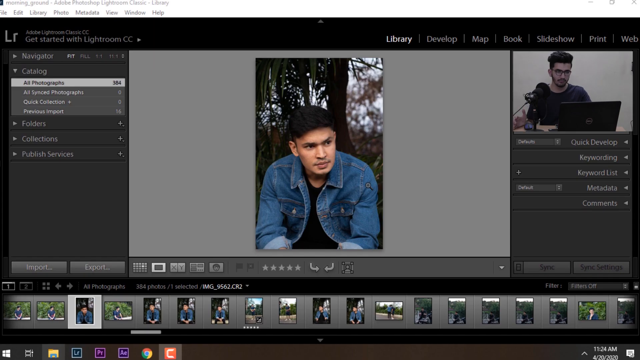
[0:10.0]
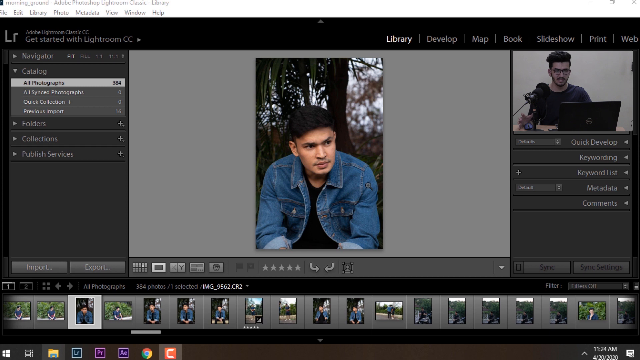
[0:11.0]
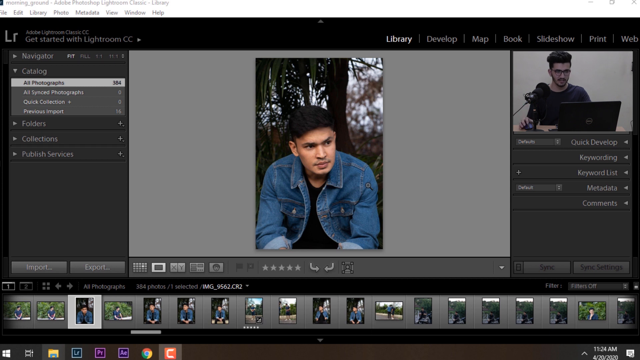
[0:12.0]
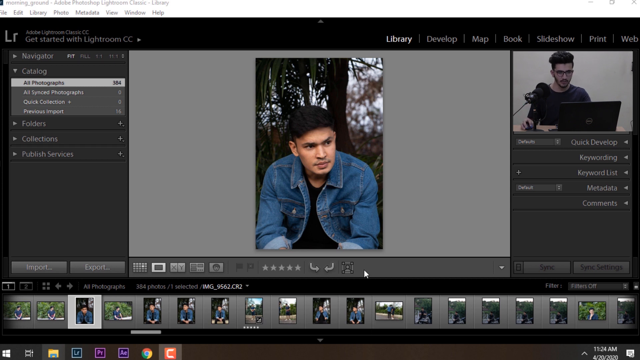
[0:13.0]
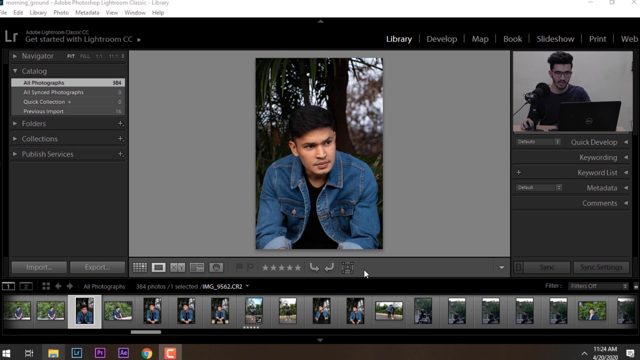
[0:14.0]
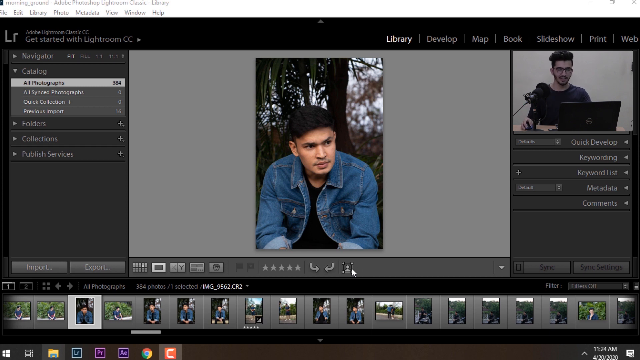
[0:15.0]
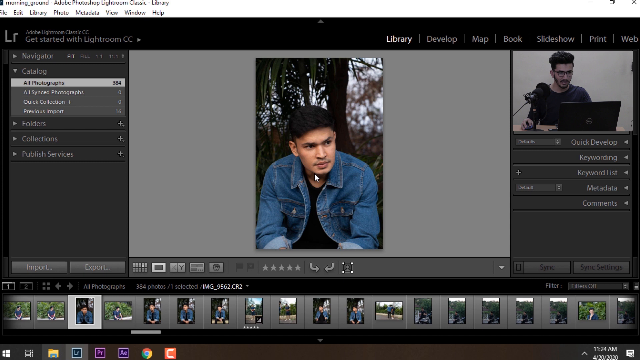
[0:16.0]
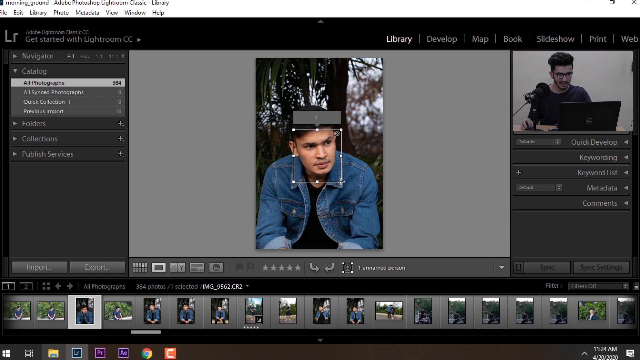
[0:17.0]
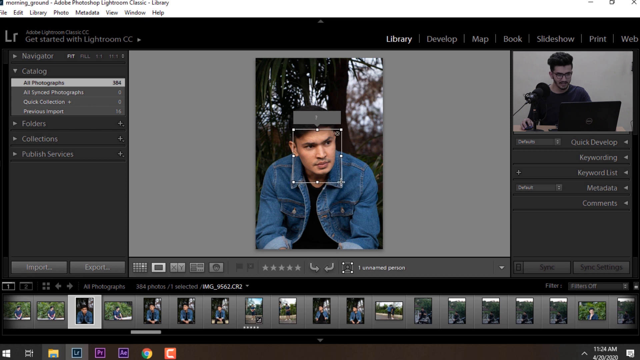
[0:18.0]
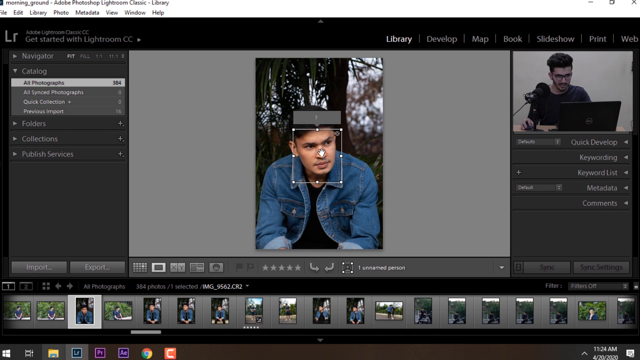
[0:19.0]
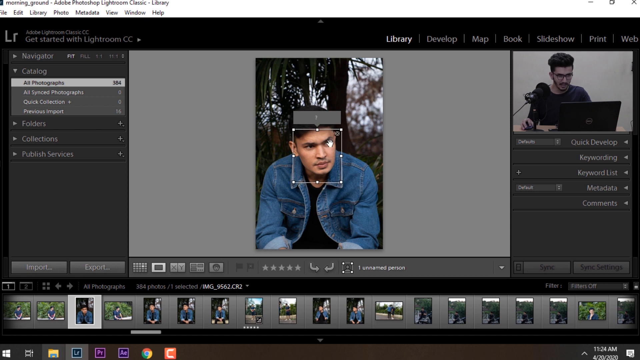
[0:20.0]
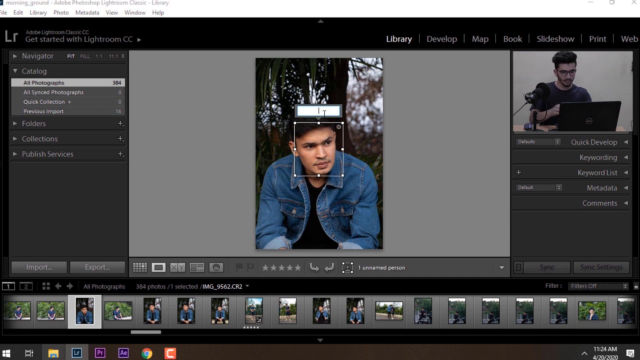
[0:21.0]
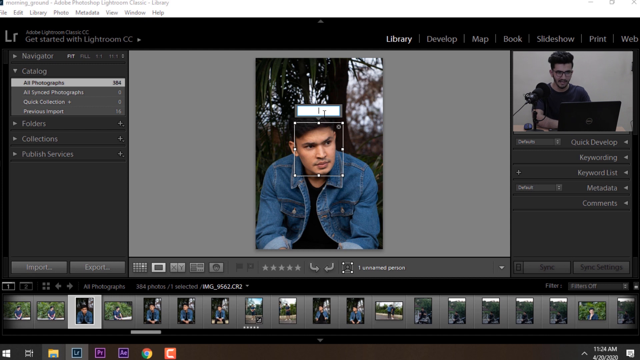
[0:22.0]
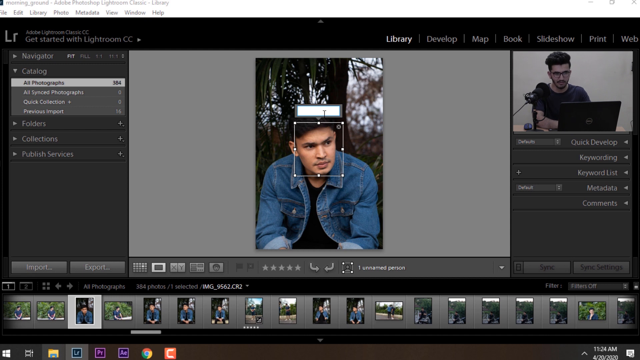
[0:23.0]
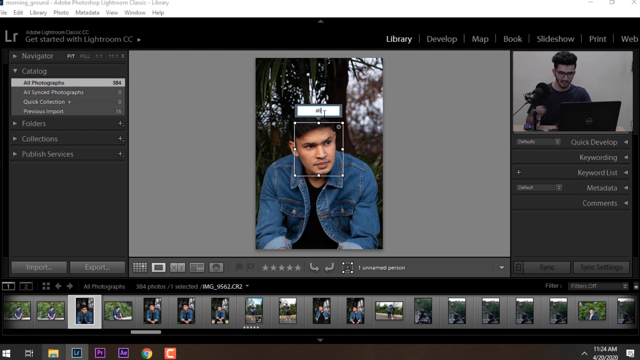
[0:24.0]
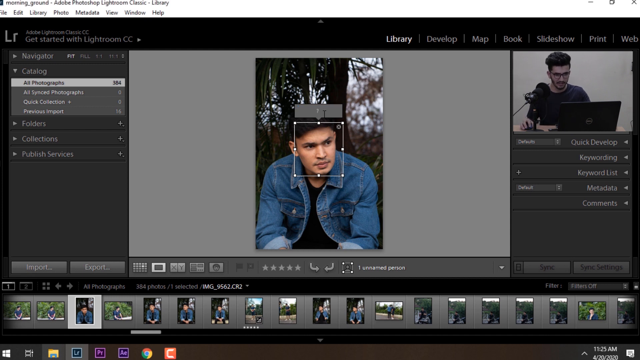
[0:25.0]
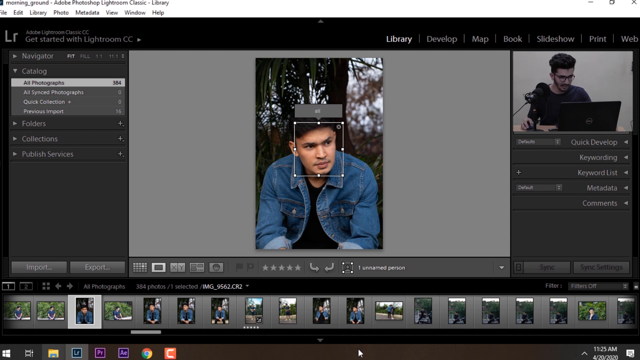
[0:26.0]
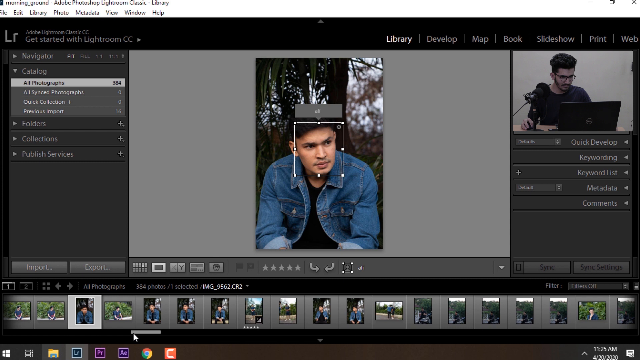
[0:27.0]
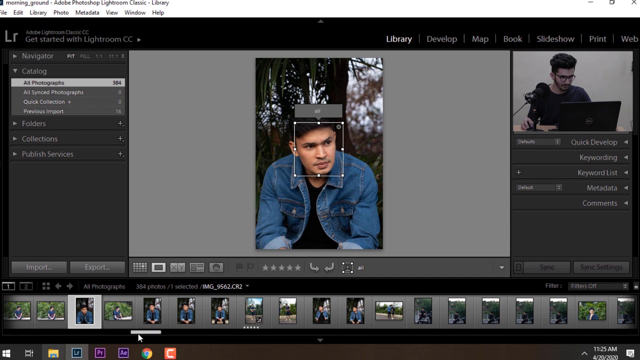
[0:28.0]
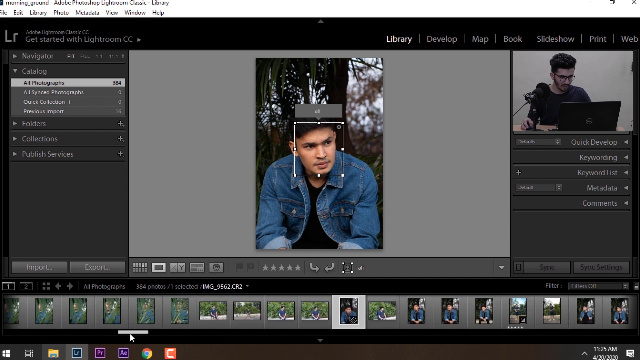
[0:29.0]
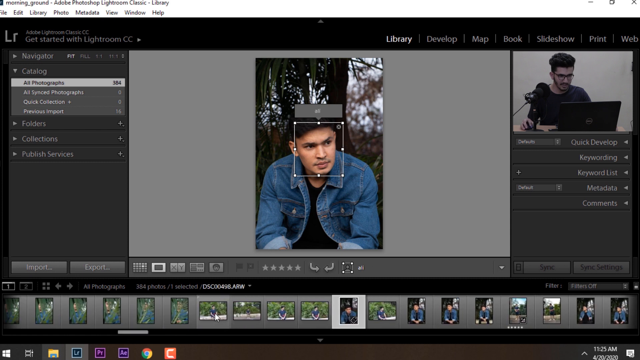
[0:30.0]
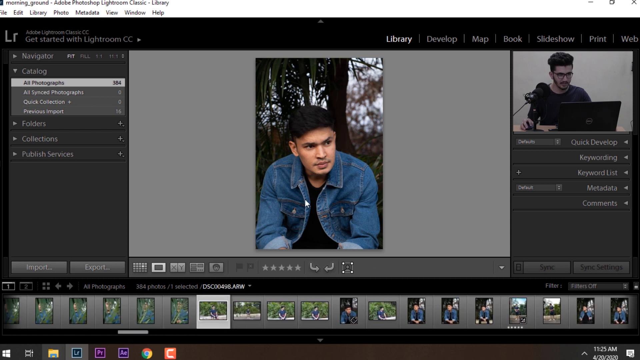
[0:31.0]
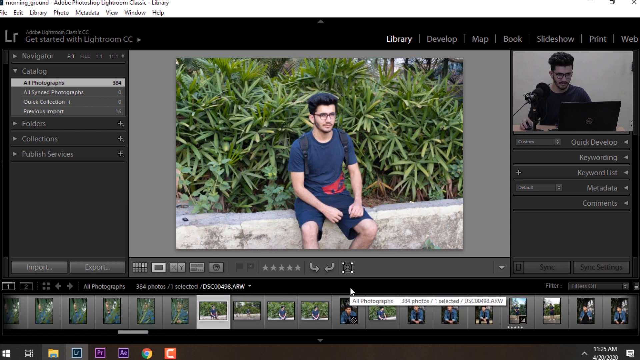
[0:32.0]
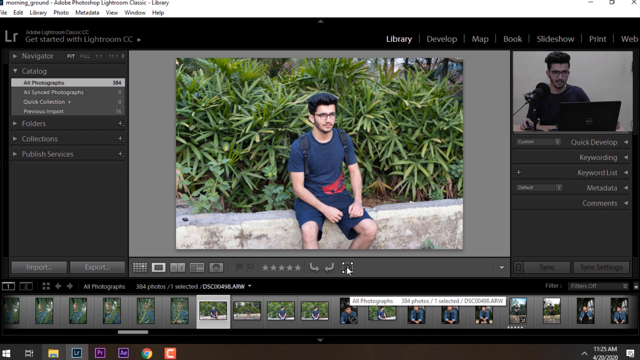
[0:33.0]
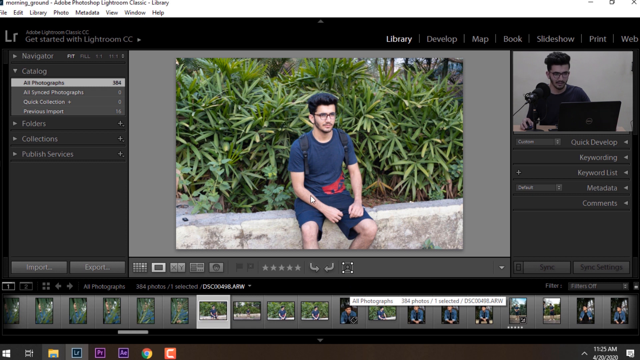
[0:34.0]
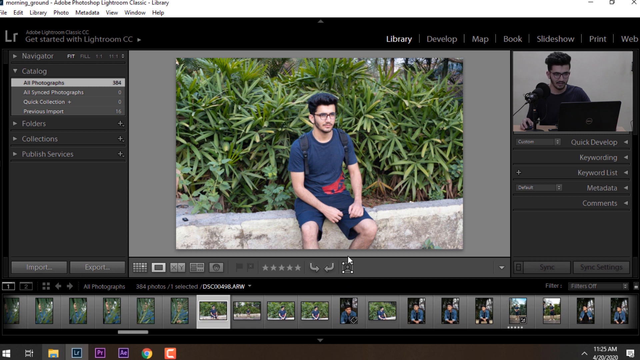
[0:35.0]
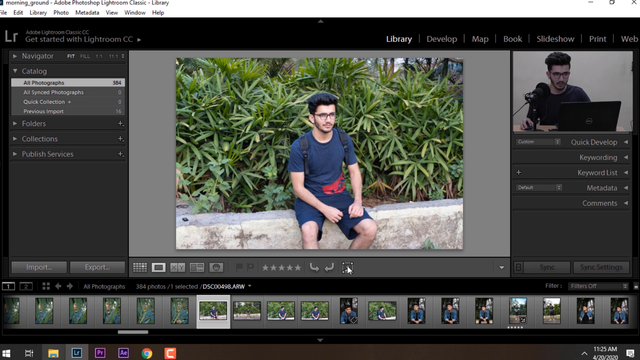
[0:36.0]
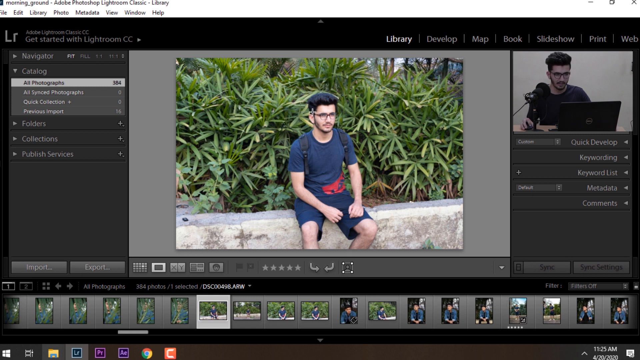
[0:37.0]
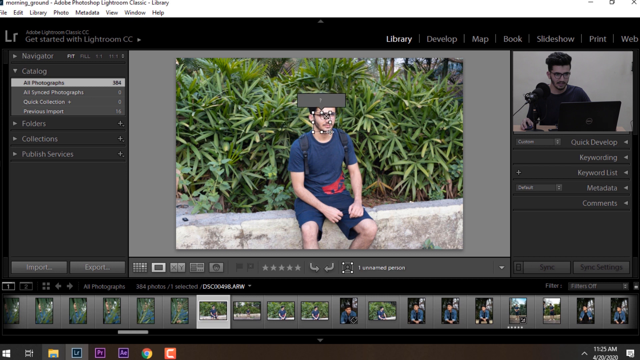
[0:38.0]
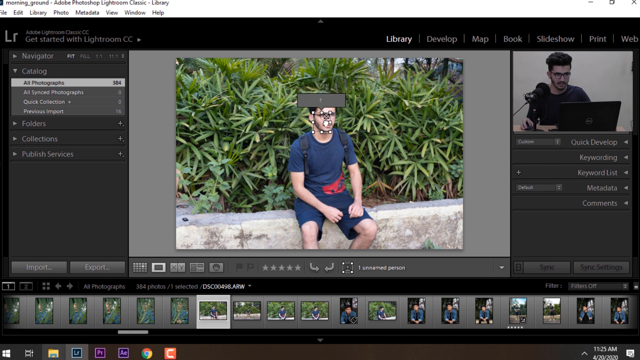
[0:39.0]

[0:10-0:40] The screen shows a photo library in what appears to be video or photograph editing software, and in the corner the man appears in real time doing what is shown on the screen. He selects the face in an image with a box; a text box appears above the box selection and he types something in, maybe a name. The view scrolls over to a new image, which the user selects, and again uses the selection tool to box that person's face, and a text box appears above the selection where text can be entered. The entire library of the person's photos is visible, and they seem to be labeling people's faces, somewhat like tagging them. The user is using Adobe Lightroom on a Dell laptop.